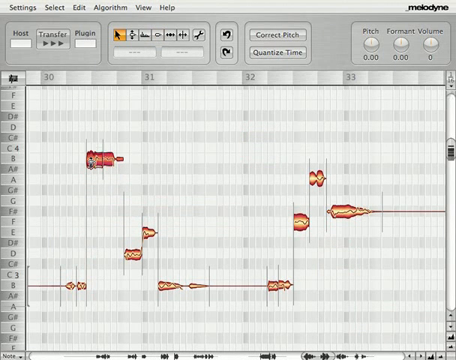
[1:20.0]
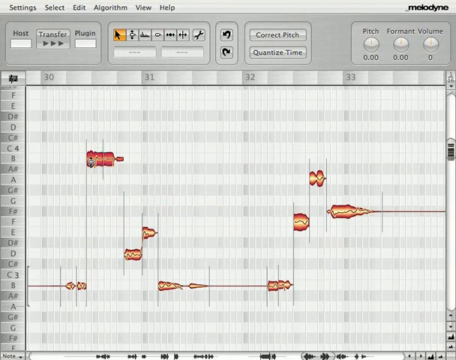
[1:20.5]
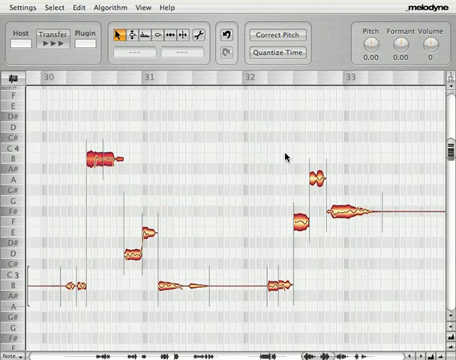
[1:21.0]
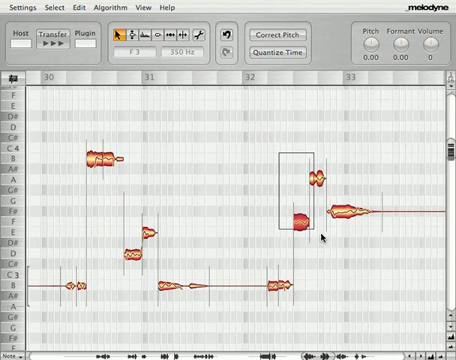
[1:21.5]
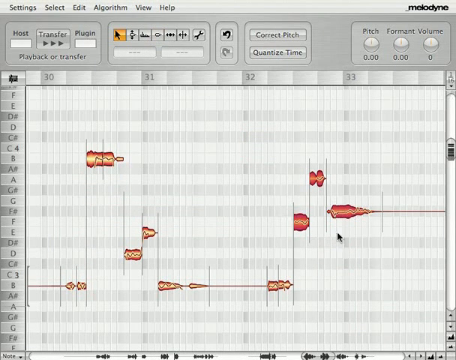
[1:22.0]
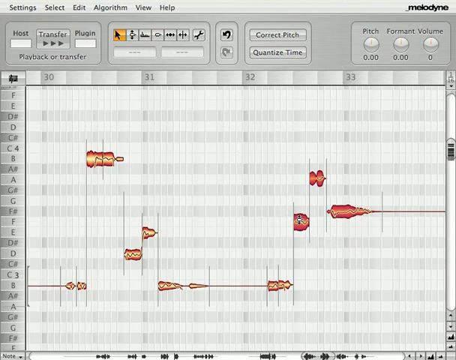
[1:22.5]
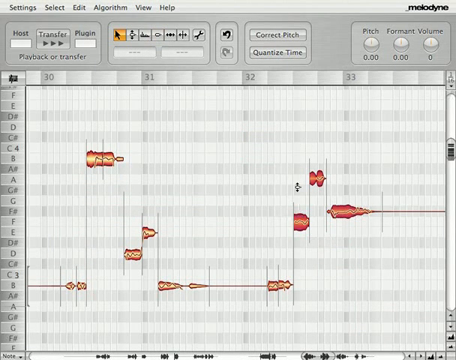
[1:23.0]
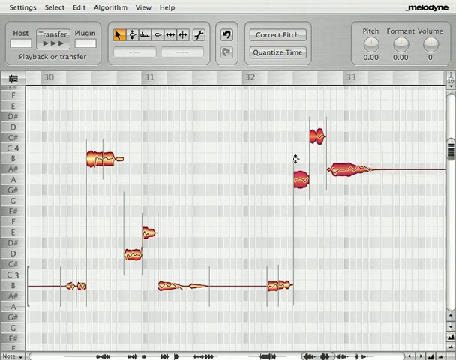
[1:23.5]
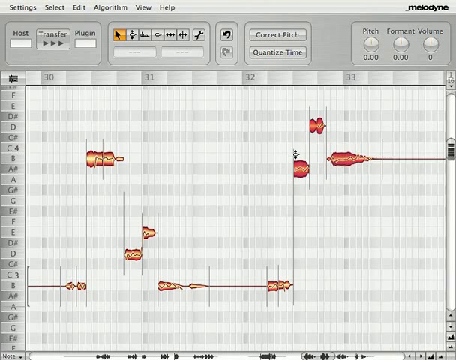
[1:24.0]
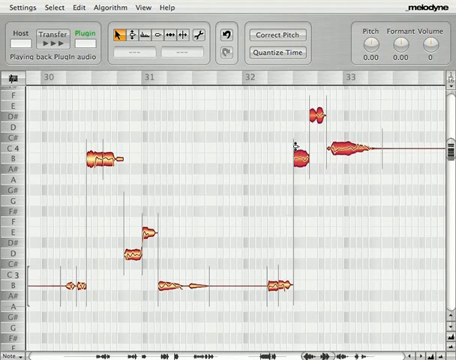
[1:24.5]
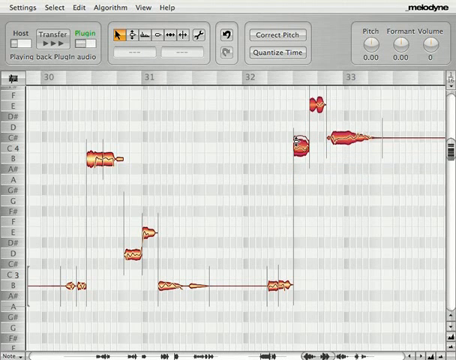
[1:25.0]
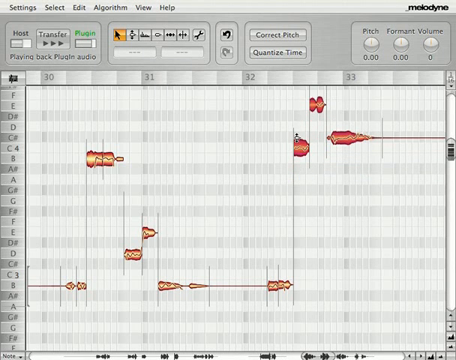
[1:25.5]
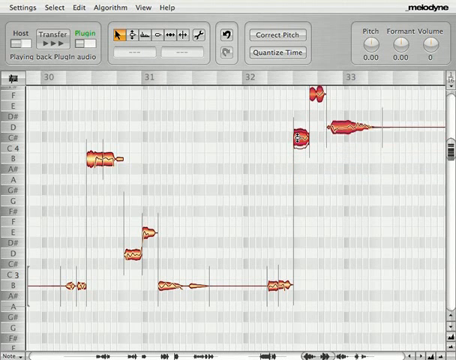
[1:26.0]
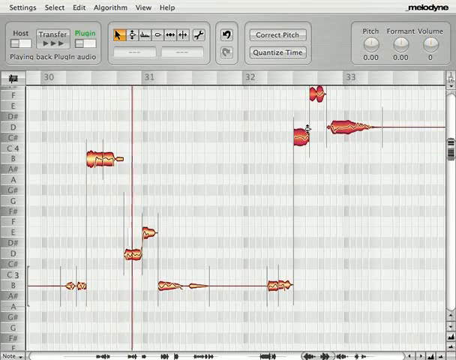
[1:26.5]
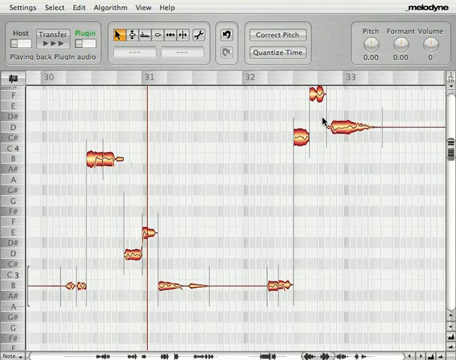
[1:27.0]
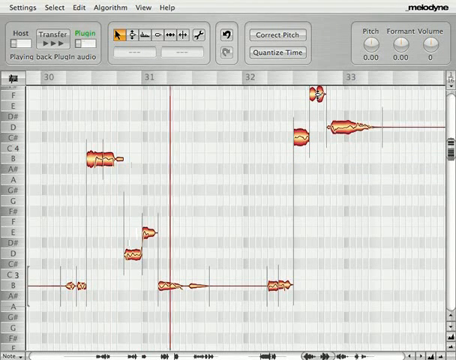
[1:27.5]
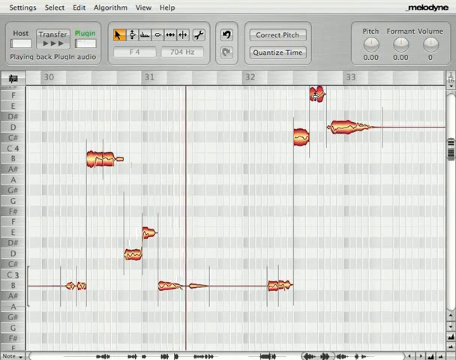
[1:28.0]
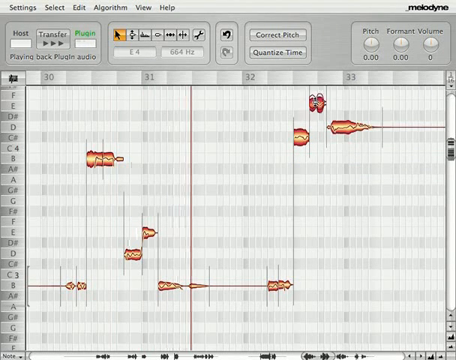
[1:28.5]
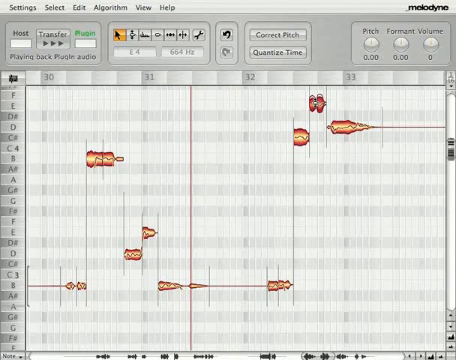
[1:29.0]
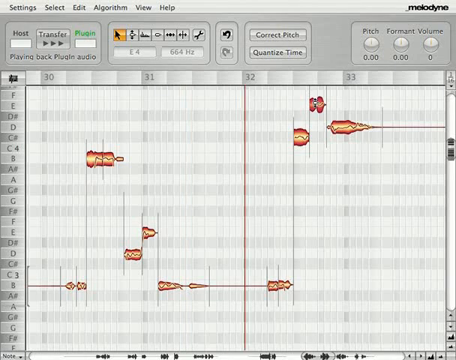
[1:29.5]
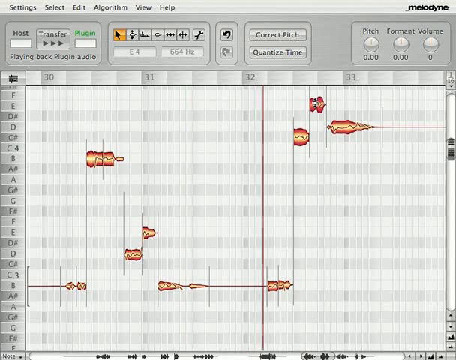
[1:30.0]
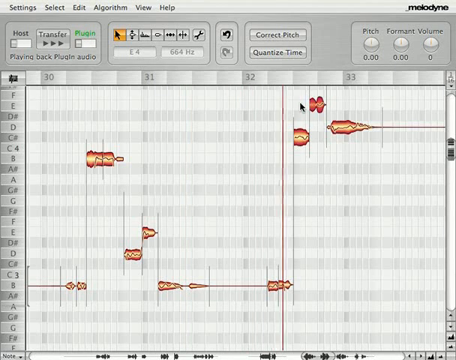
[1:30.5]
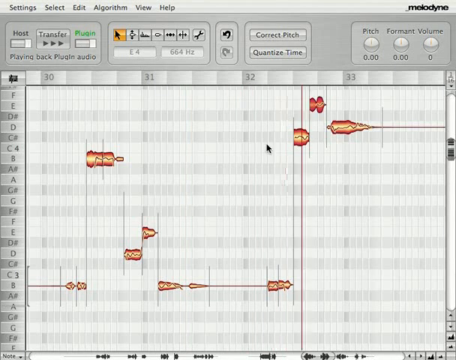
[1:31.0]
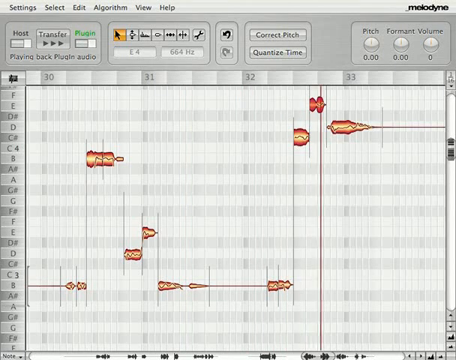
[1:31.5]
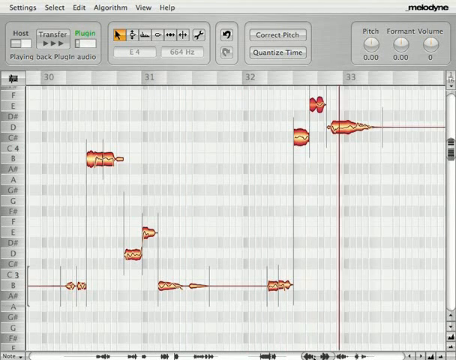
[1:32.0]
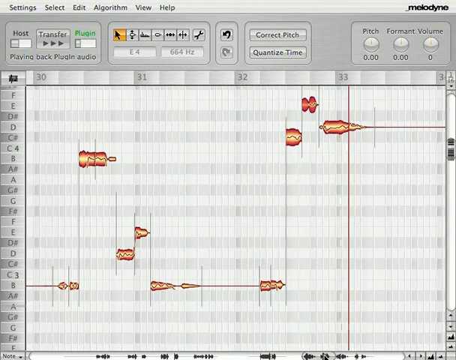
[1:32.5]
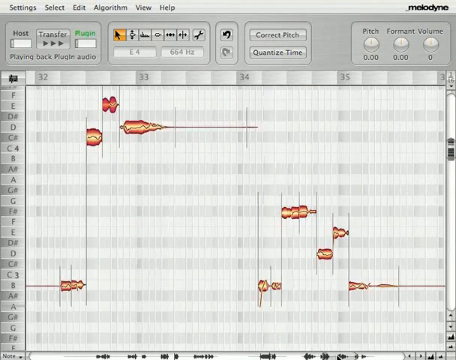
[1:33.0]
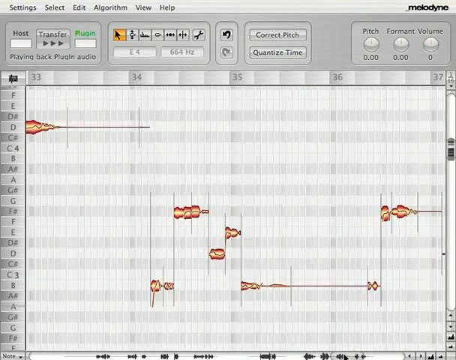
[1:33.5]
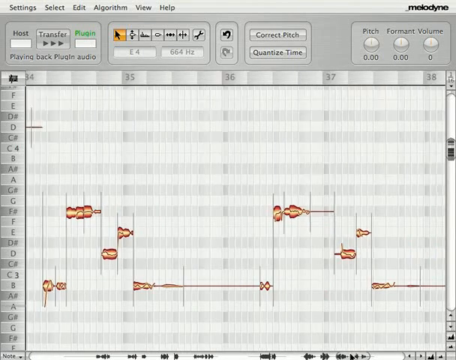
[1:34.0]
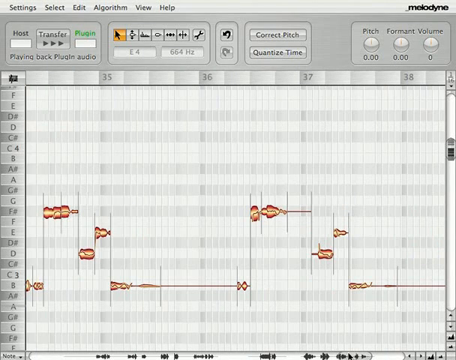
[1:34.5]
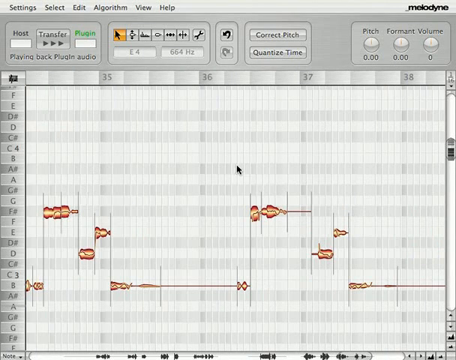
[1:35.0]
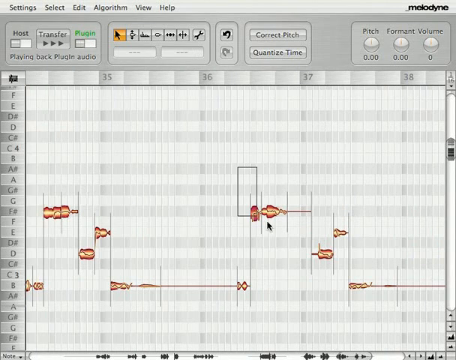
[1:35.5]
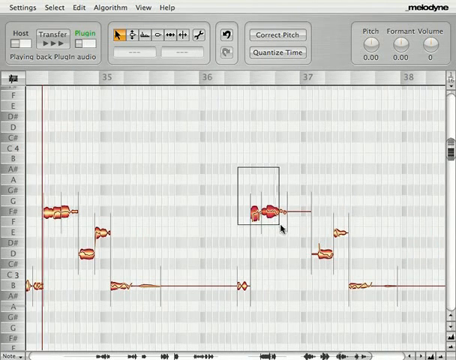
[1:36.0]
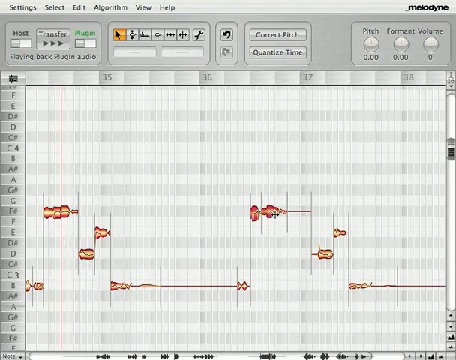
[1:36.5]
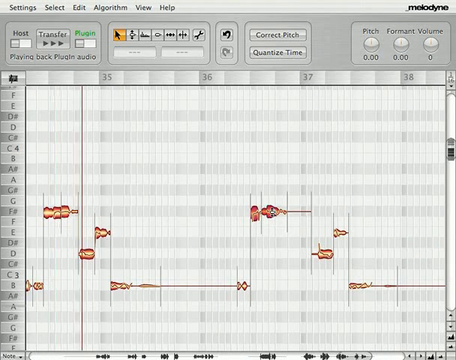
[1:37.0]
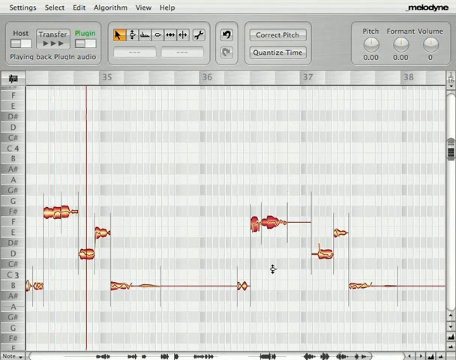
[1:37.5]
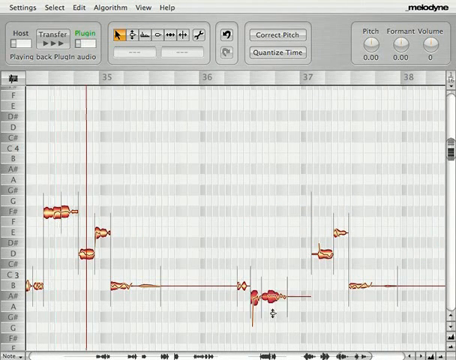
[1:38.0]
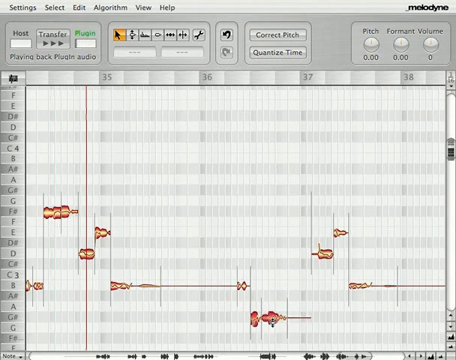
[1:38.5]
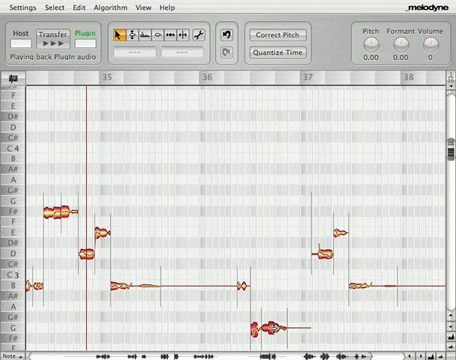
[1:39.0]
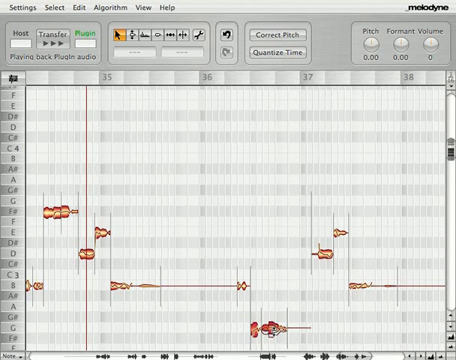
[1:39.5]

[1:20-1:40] In the Melodyne software, the person uses the mouse to drag different notes up and down on the screen, editing the music. A red vertical bar moves across the screen from left to right. In the upper left corner of the software, under "host" and under "plug-in," silver bars move across white bars, and the one under plug-in turns green.